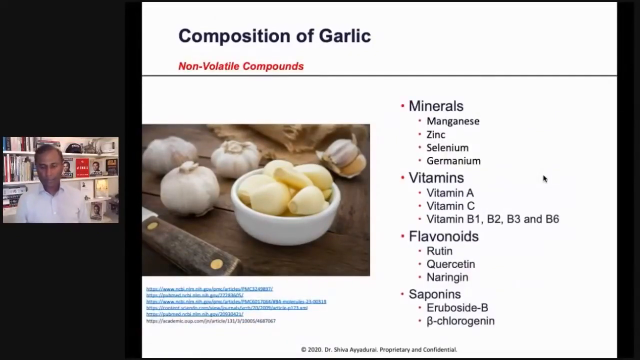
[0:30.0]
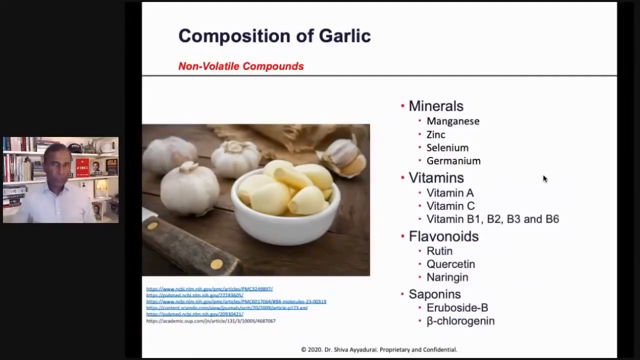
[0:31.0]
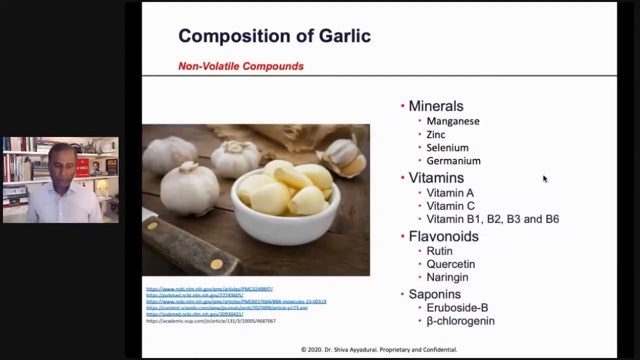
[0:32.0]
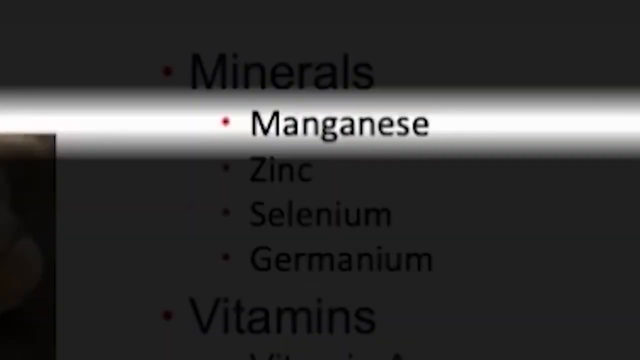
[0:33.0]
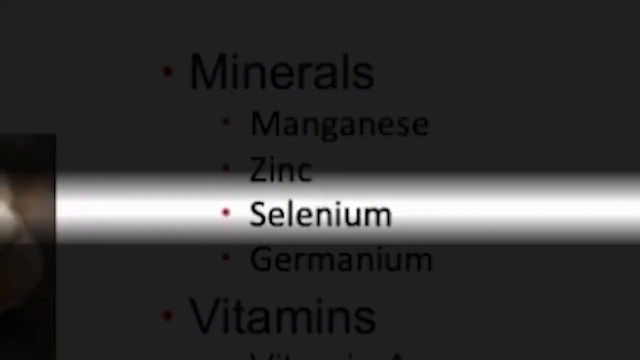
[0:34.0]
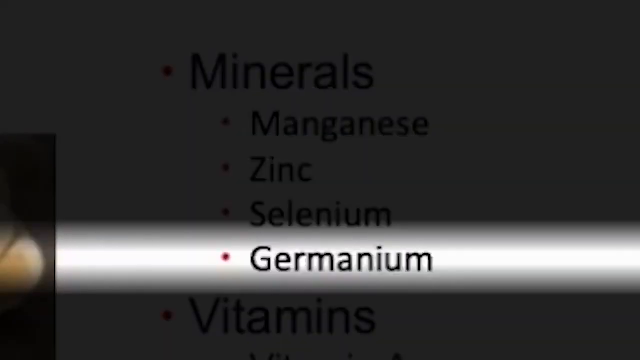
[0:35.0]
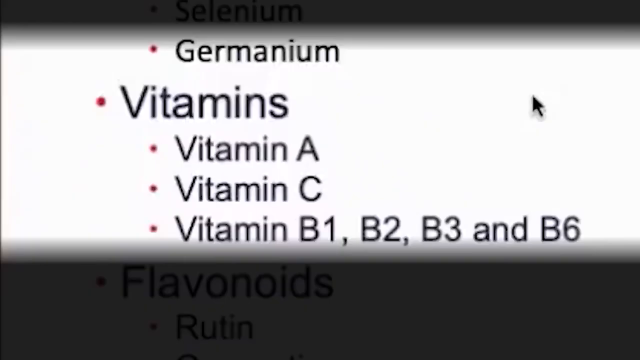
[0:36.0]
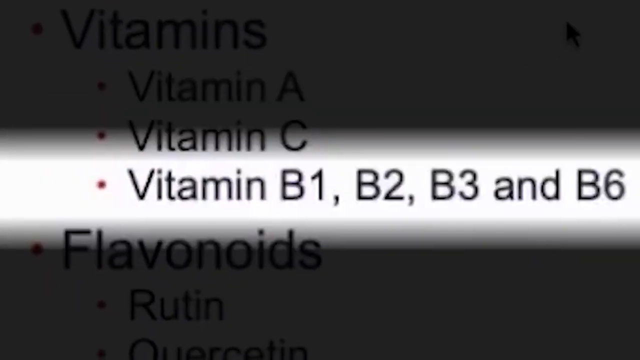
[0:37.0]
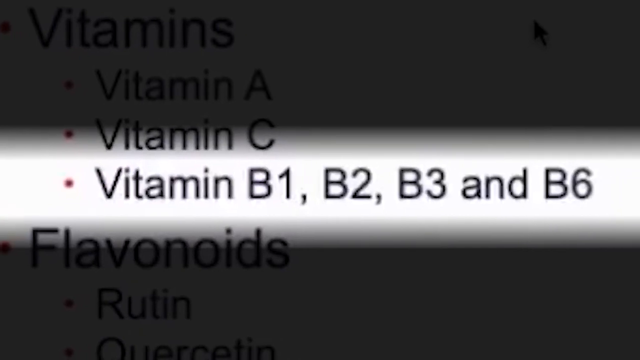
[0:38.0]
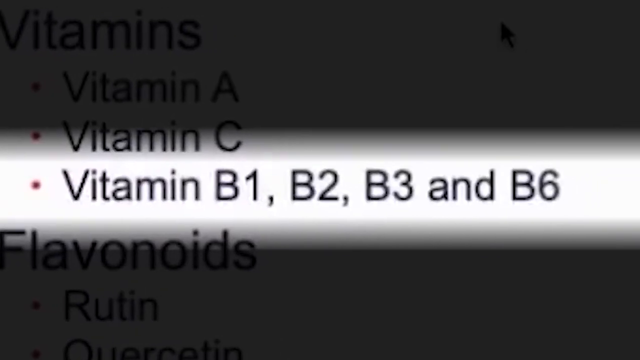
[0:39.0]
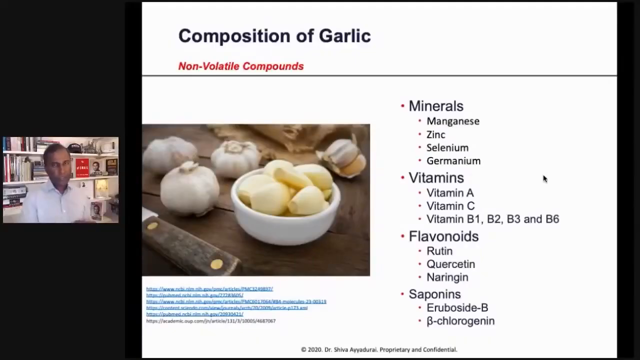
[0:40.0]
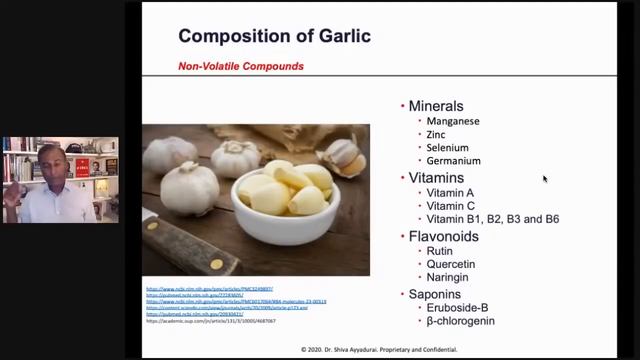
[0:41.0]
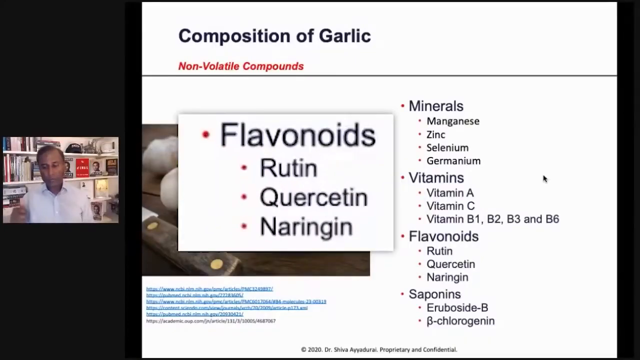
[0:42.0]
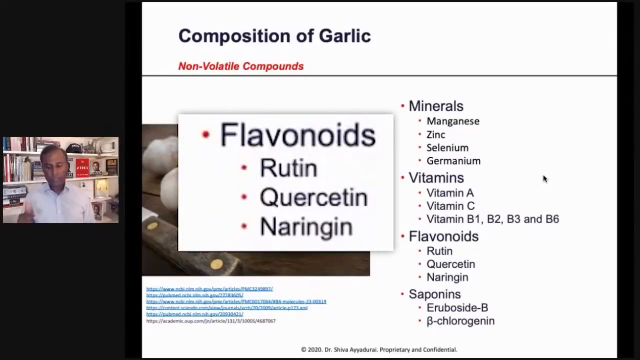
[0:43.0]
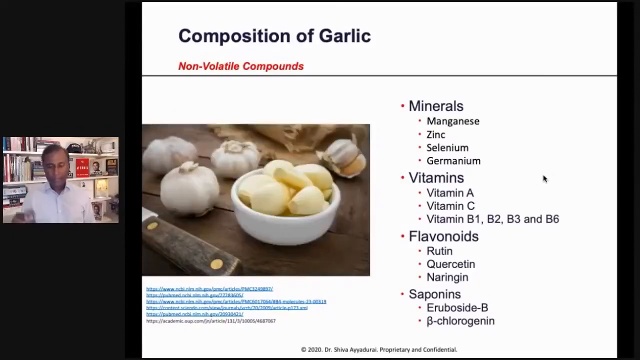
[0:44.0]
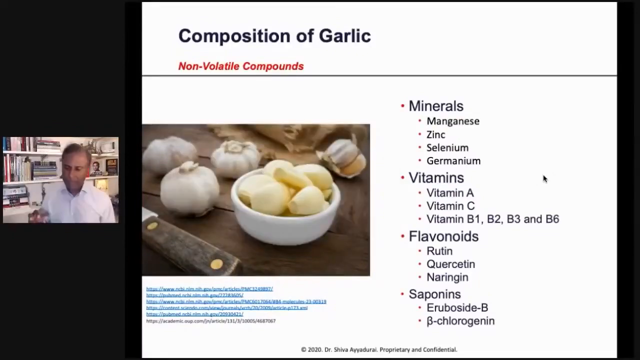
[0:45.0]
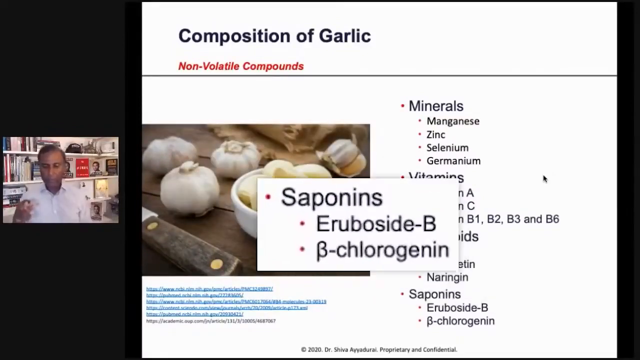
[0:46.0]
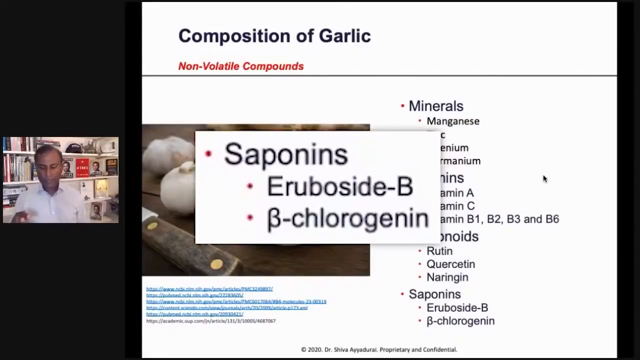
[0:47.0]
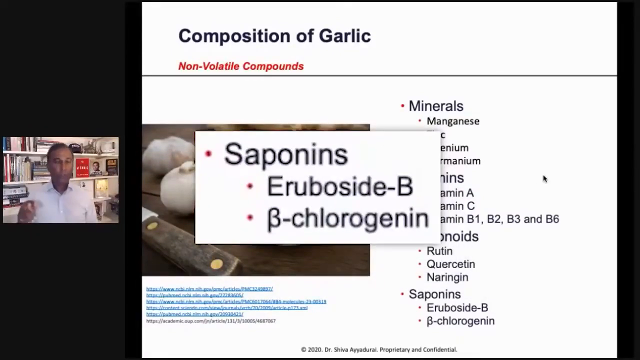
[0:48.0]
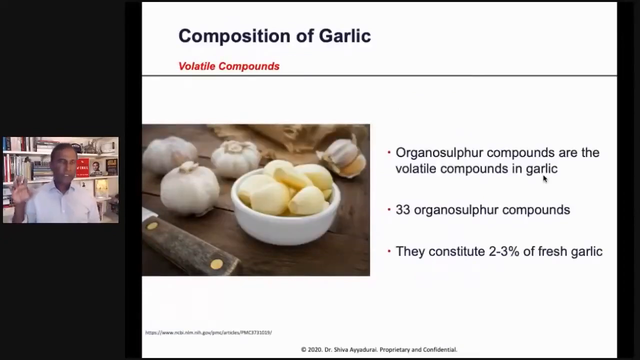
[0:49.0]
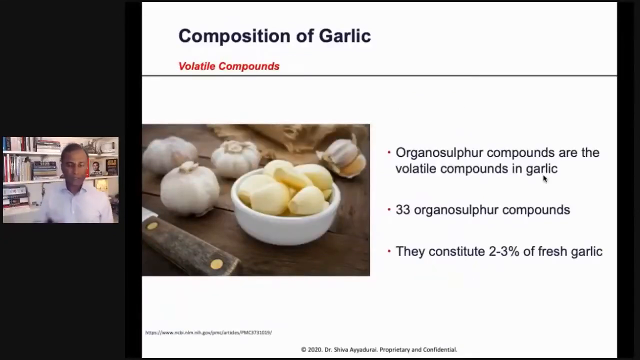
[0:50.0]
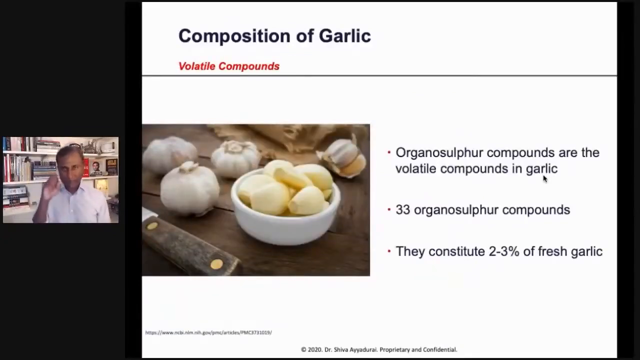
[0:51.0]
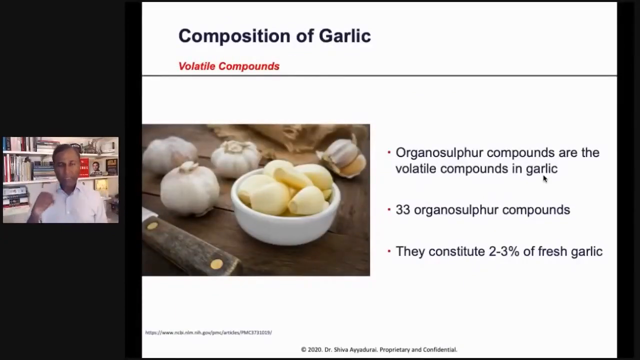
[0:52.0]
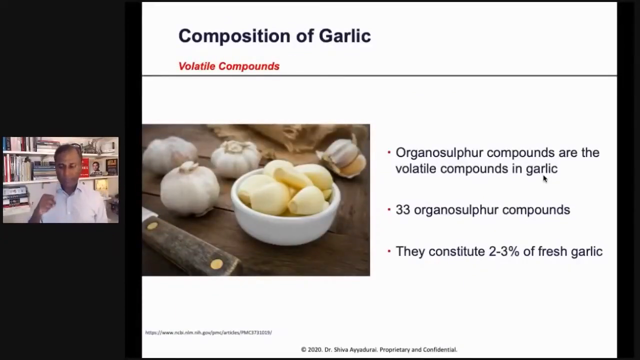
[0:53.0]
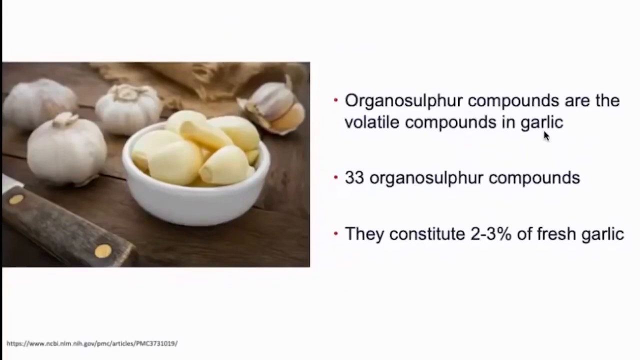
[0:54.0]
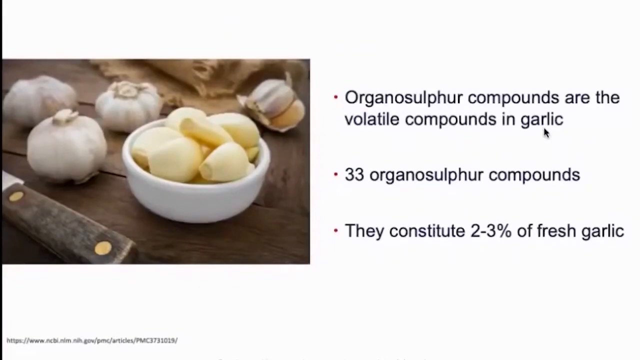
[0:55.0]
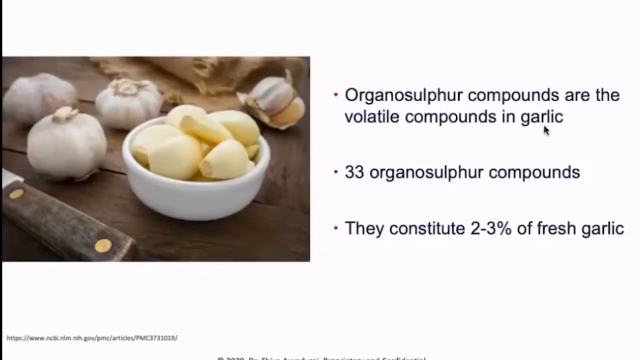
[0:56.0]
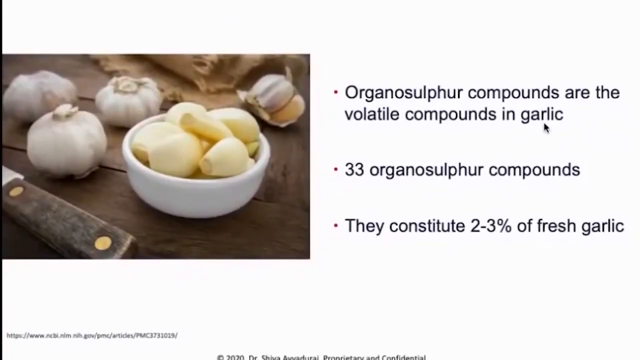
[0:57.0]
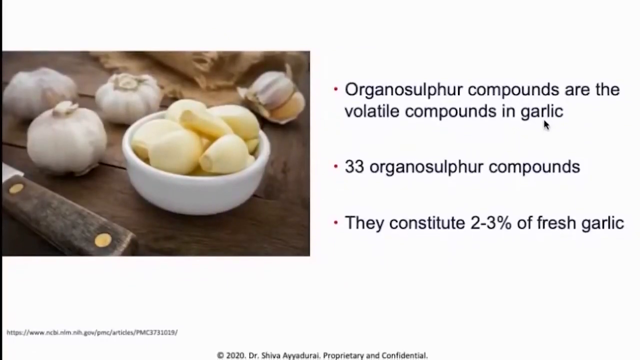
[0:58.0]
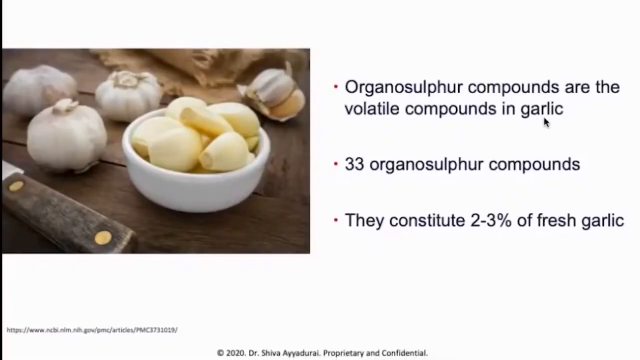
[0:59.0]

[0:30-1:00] A new PowerPoint page appears, still with the small video of the man talking on the left. At the very top it reads "composition of garlic", and right below, in red, "non-volatile compounds". A black stripe again divides the screen into two areas. Underneath is the same garlic picture, and on the right a bulleted list divided into minerals, vitamins, flavonoids, and saponins. The video zooms dramatically onto the Minerals section and the specifications beneath it. The image darkens, almost as if a light has been turned off, and only one line is highlighted at a time: first manganese, then zinc lower down, then selenium, then germanium underneath. The video returns to the PowerPoint image, then zooms onto the vitamins point; again it turns dark and only vitamin A, then vitamin C, then vitamins B1, B2, B3, and B6 are highlighted. The full PowerPoint image returns. A close-up of the flavonoid section appears on top of the PowerPoint image in the center of the screen, reading "Flavonoids" with "Routine", "Quercetin", and "Nalgene" underneath. That close-up disappears and a close-up of the saponin section appears. The video then changes to a new PowerPoint page titled "composition of garlic", with "volatile compounds" in red underneath. To the right of the usual garlic image are three points: "organosulfur compounds are the volatile compounds in garlic", "33 organosulfur compounds", and "they constitute 2-3% of fresh garlic". The same page then takes up the whole screen, cutting out the video of the man talking.